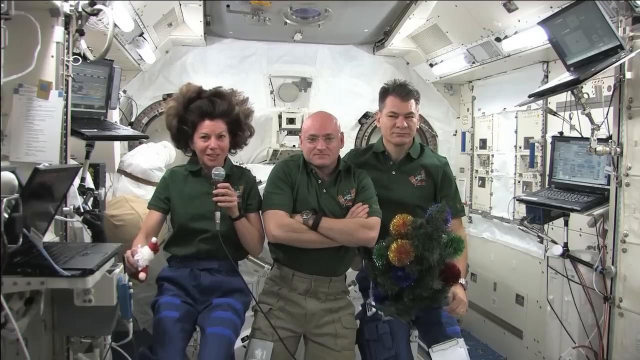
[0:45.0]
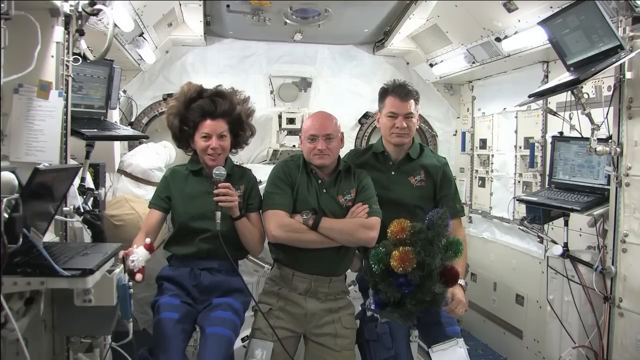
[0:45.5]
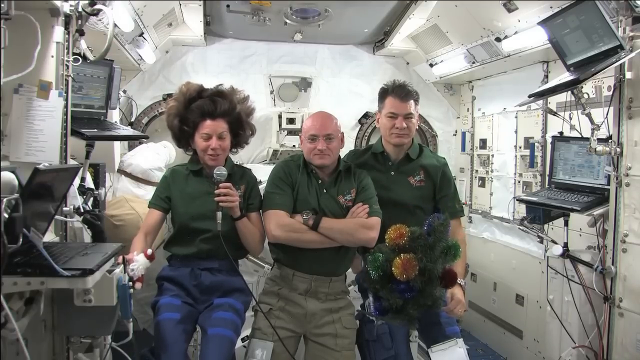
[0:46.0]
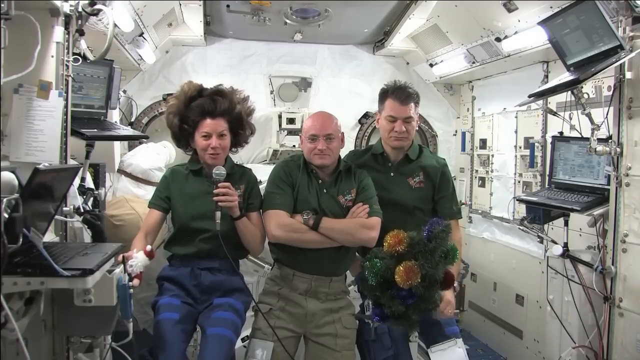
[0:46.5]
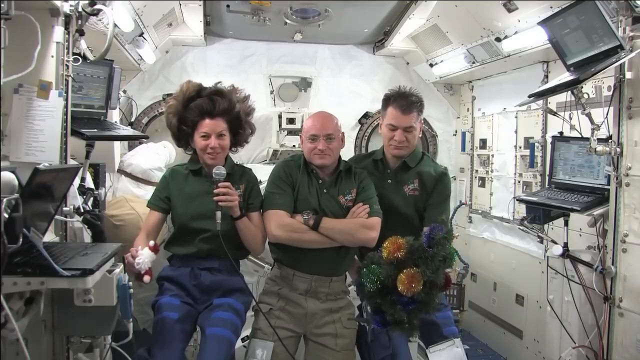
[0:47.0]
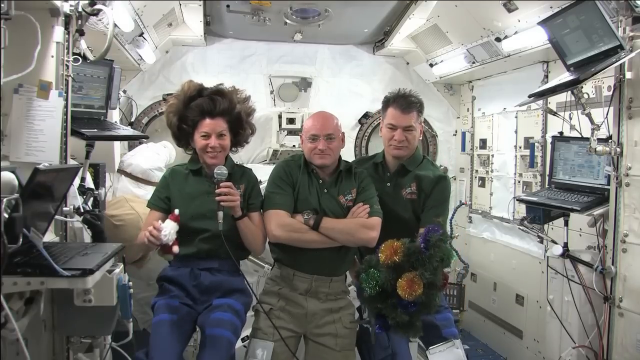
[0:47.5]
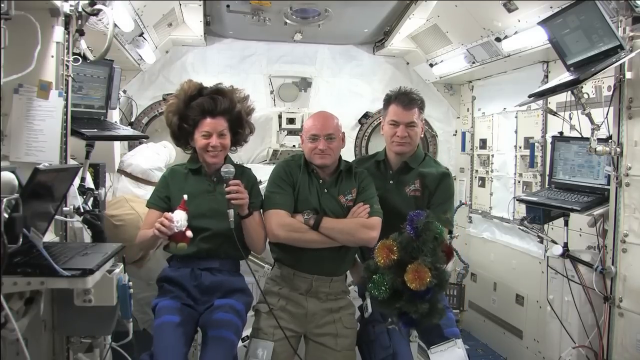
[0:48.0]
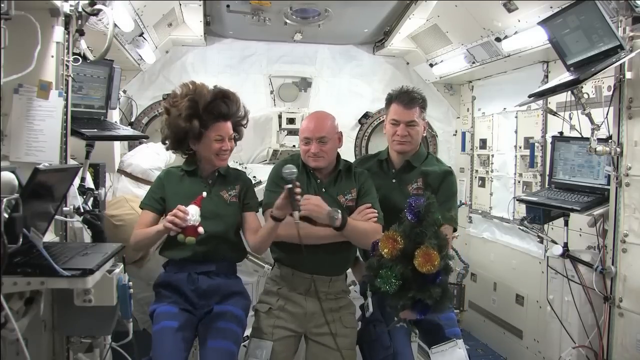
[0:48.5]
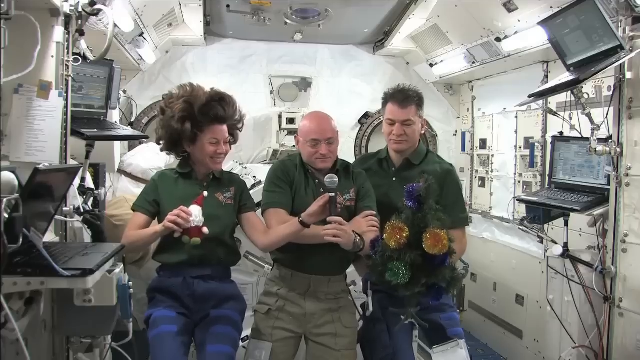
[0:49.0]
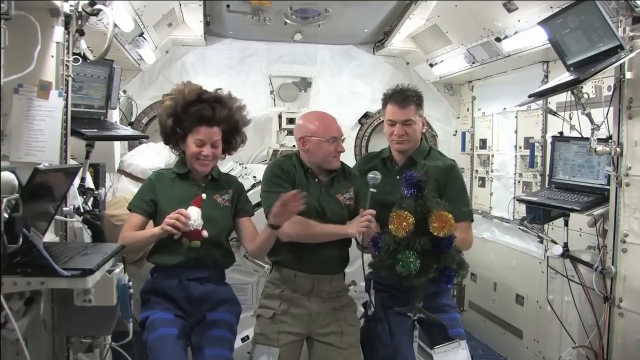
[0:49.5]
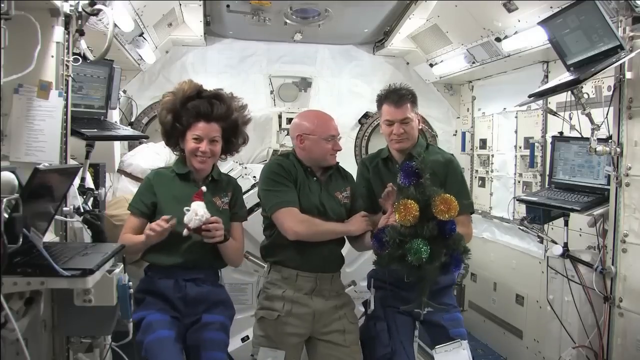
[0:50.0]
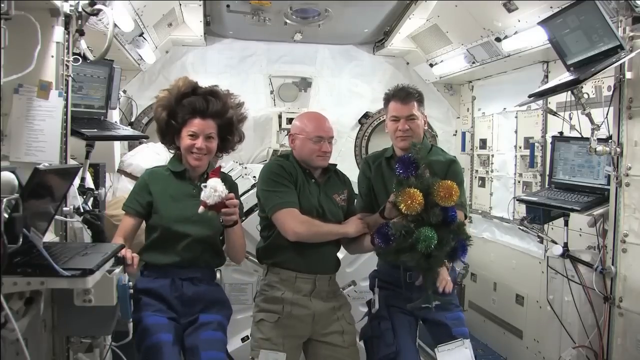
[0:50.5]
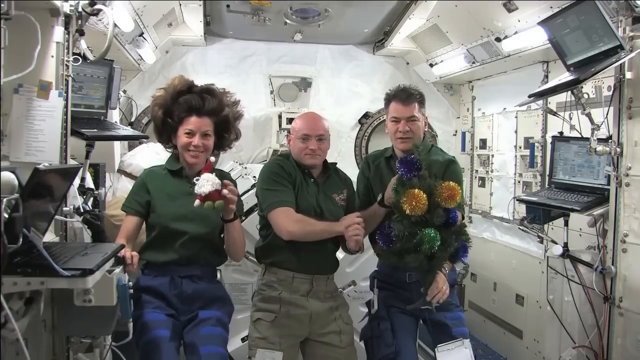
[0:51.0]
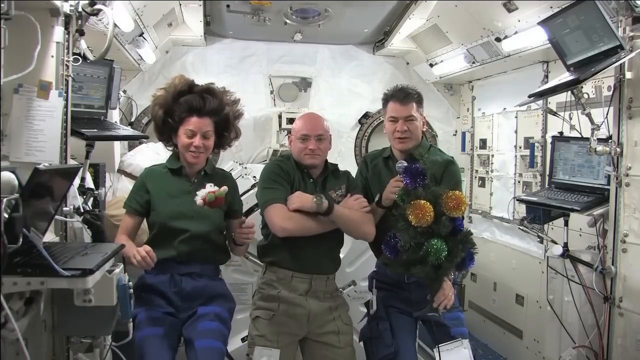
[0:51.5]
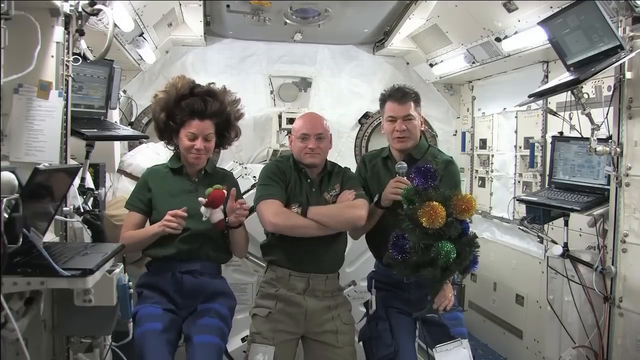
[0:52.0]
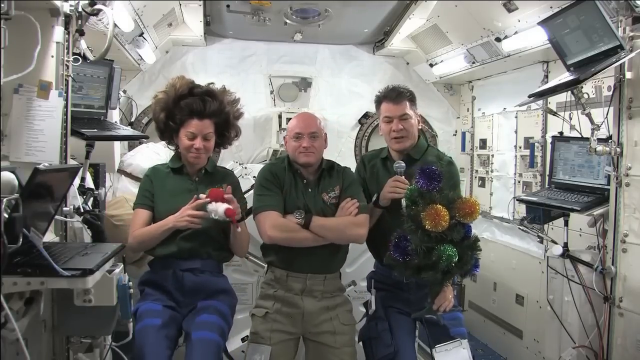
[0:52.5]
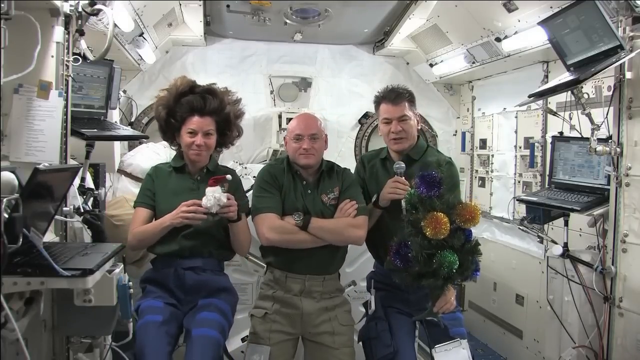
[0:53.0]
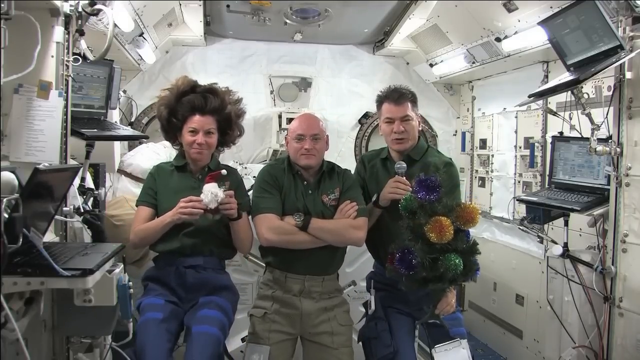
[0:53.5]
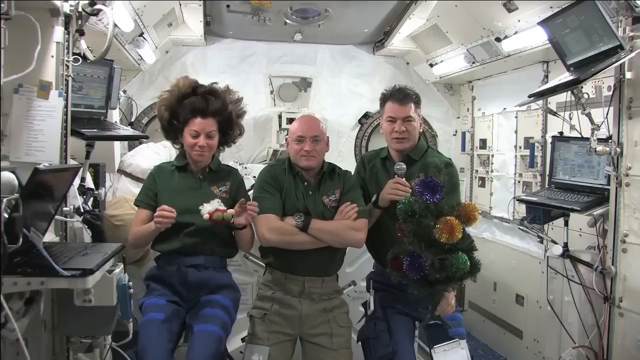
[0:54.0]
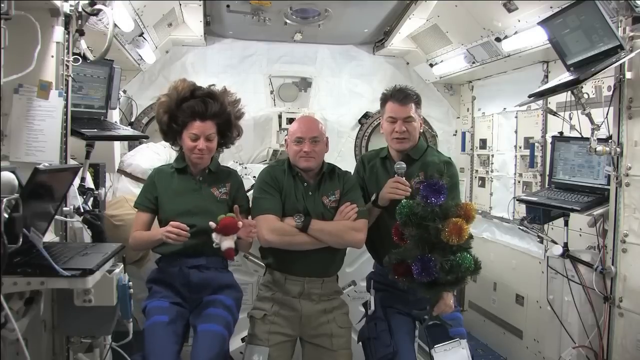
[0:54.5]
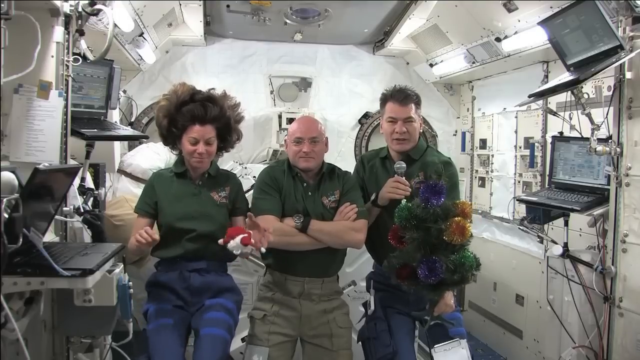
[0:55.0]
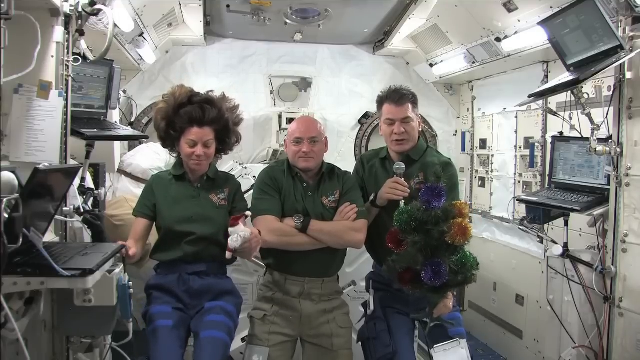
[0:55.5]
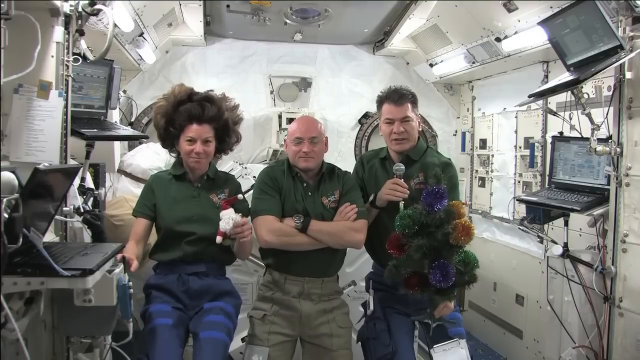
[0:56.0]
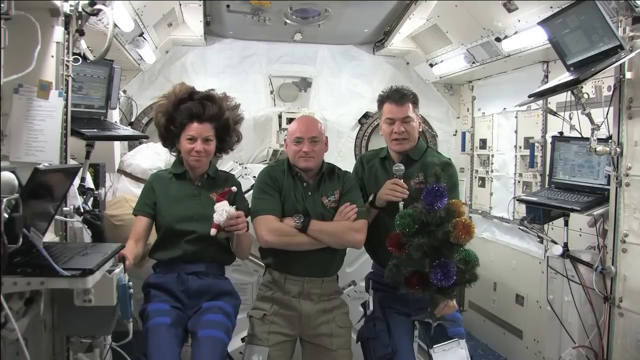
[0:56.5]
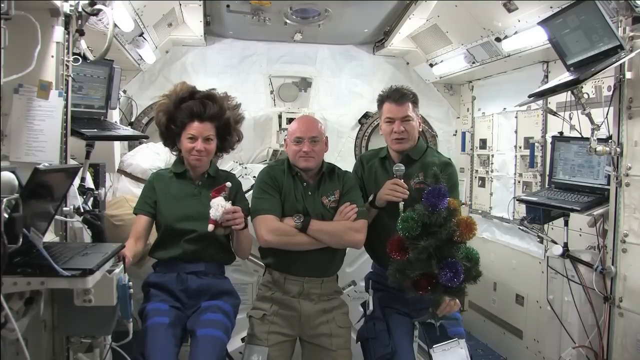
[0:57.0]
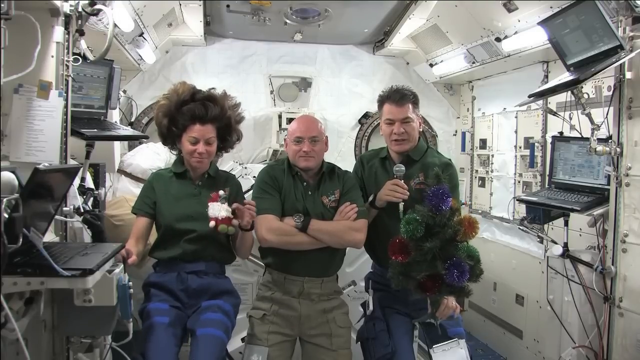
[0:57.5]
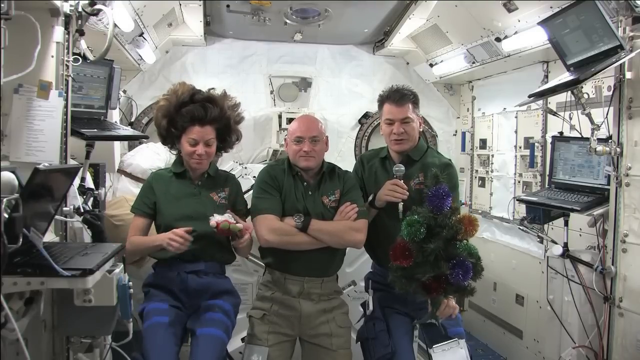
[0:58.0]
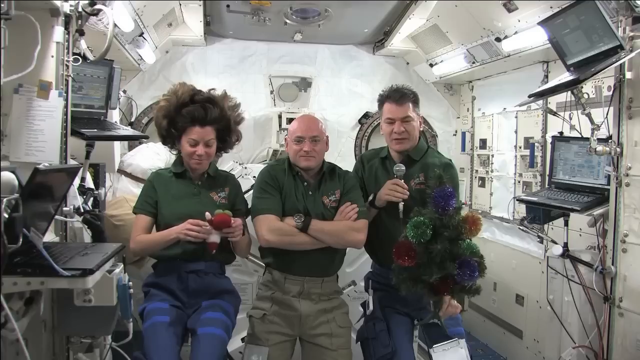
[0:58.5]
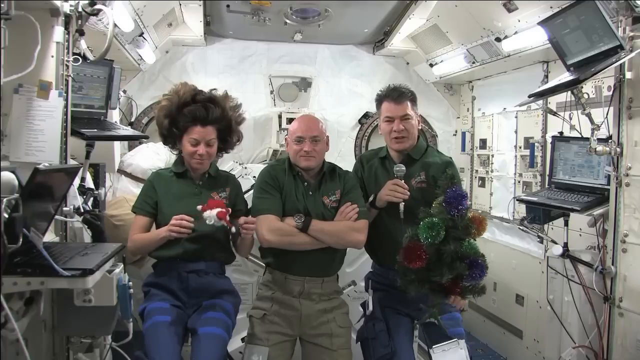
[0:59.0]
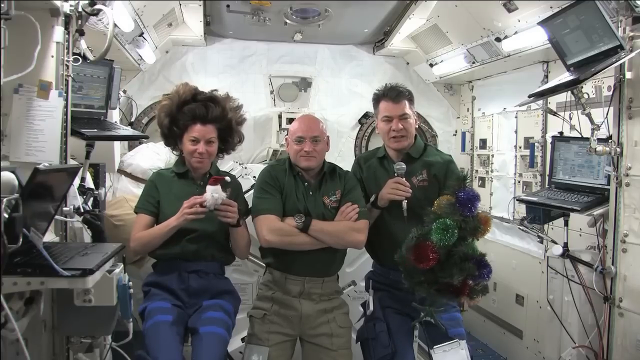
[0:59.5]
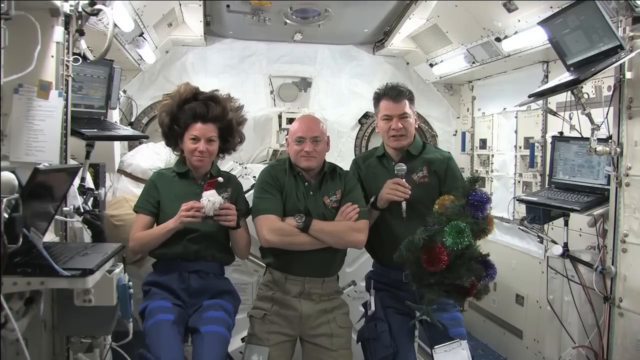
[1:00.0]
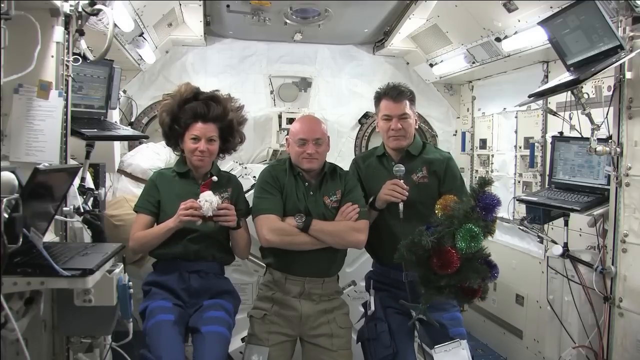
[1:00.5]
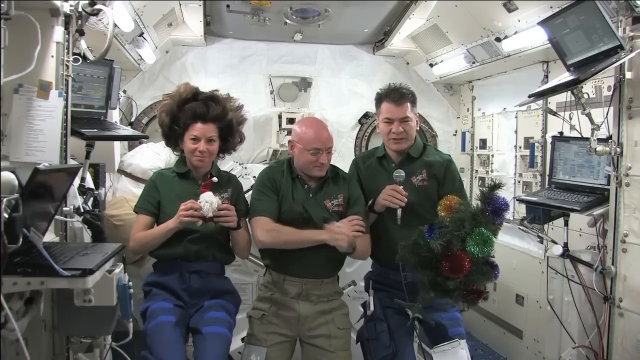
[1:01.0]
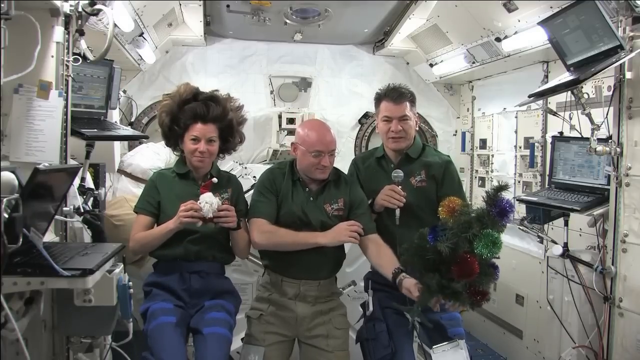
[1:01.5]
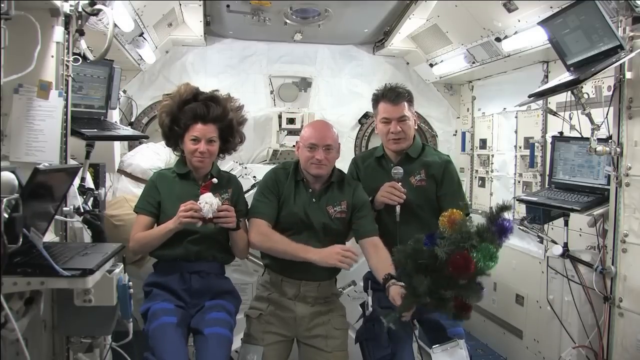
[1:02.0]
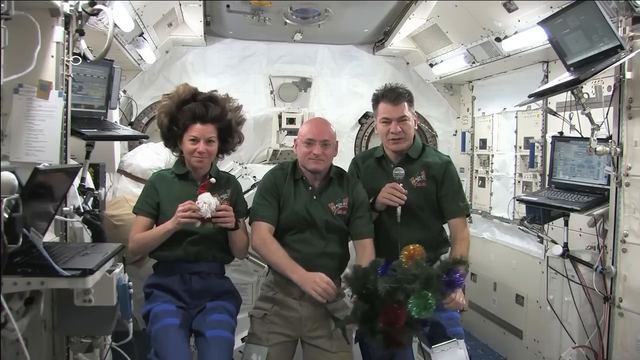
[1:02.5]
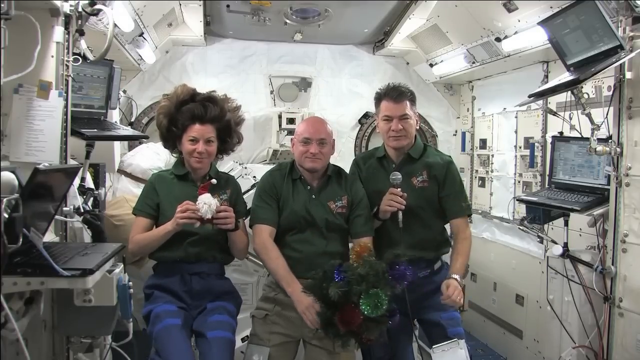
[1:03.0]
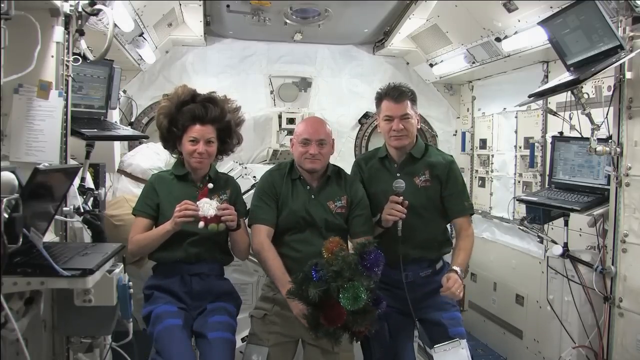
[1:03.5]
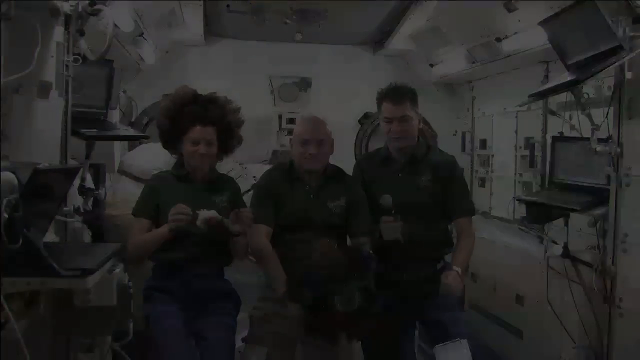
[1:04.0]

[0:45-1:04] Three astronauts, one woman and two men, float in zero gravity with computer equipment and other pieces of equipment of the spaceship behind them. The woman holds a microphone in her left hand and a small Santa Claus doll in her right hand. The man in the middle looks at the camera, smiling, with his arms crossed over his chest, and the man on the right looks down at a floating Christmas tree, very small and obviously artificial, with areas of gold, purple and green. They pass the microphone back and forth: the woman passes it to the man in the middle, who passes it to the man on the far right, who is now speaking. The woman lets go of the Santa Claus doll and watches as it cartwheels wildly in zero gravity. The Christmas tree keeps floating around, and the astronaut in the middle grabs it.